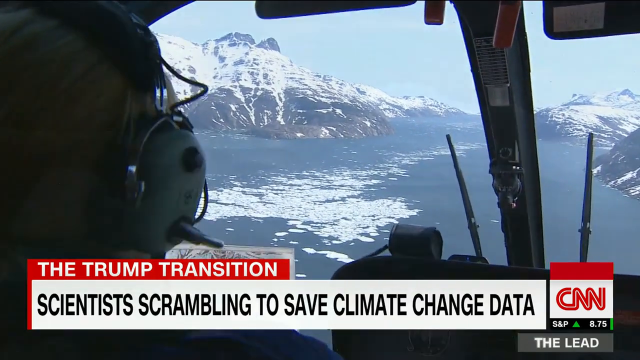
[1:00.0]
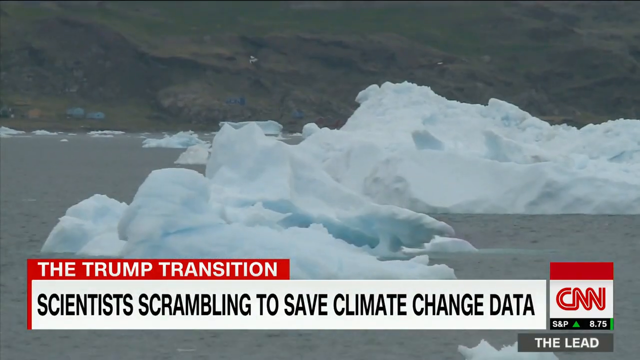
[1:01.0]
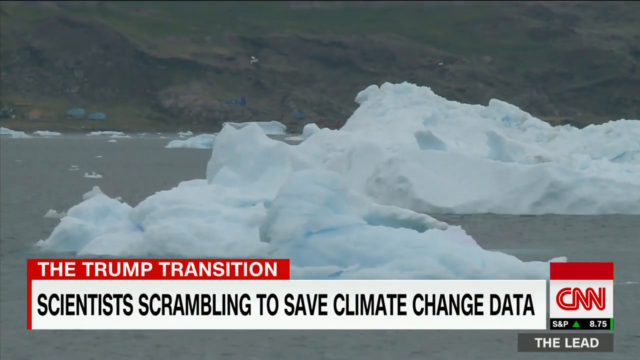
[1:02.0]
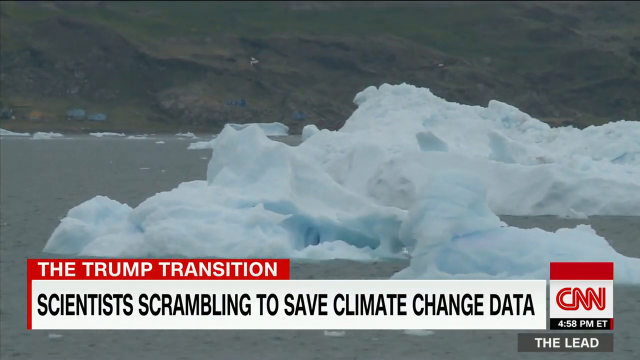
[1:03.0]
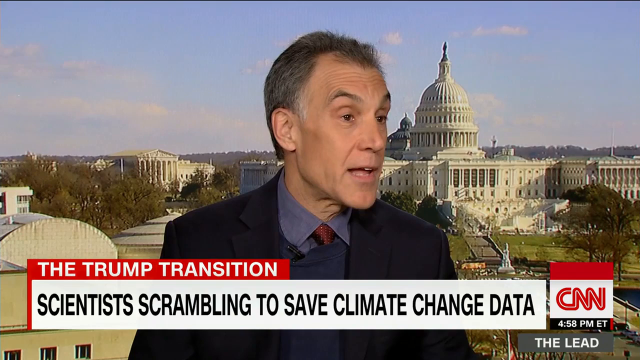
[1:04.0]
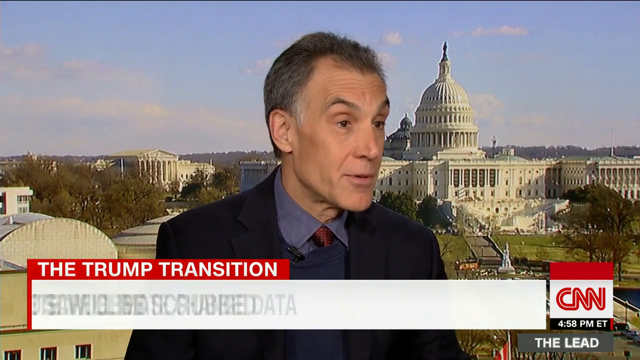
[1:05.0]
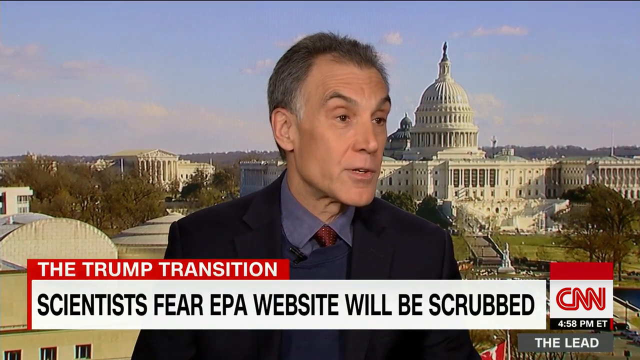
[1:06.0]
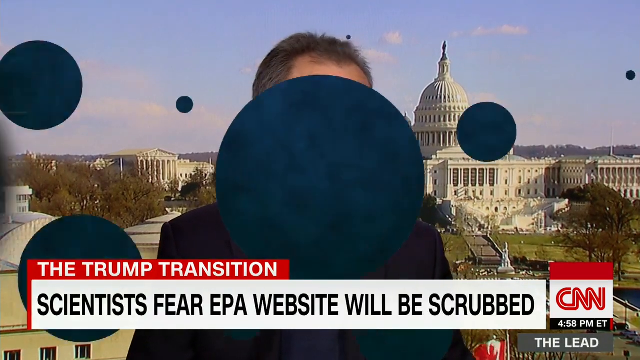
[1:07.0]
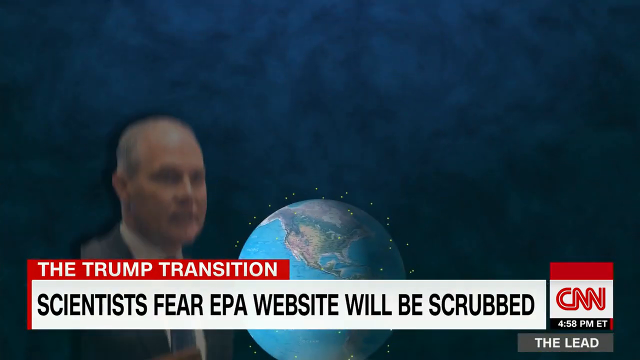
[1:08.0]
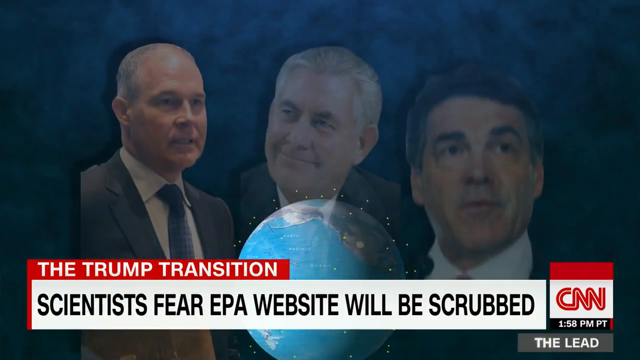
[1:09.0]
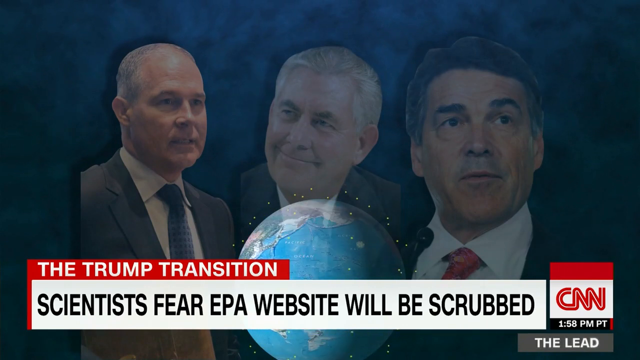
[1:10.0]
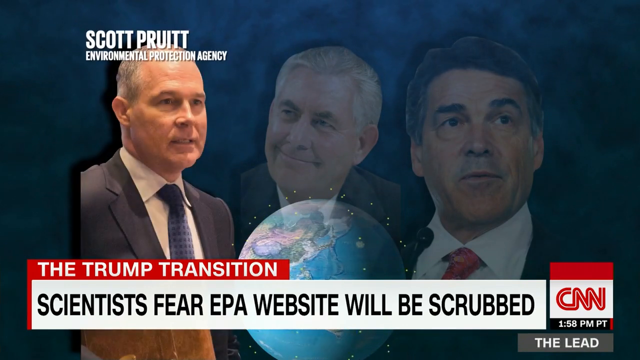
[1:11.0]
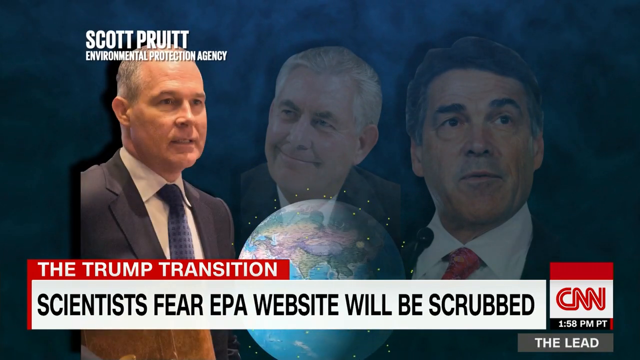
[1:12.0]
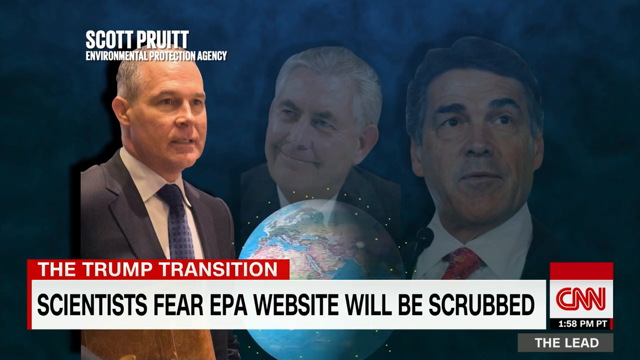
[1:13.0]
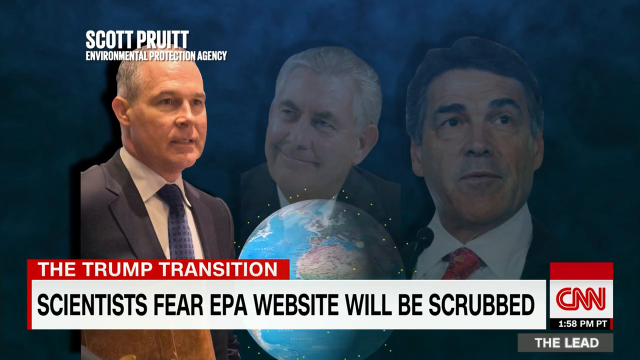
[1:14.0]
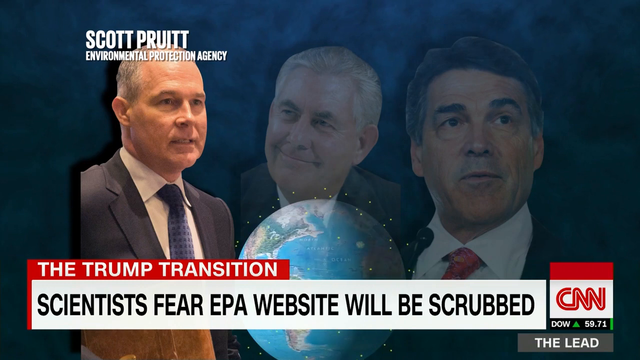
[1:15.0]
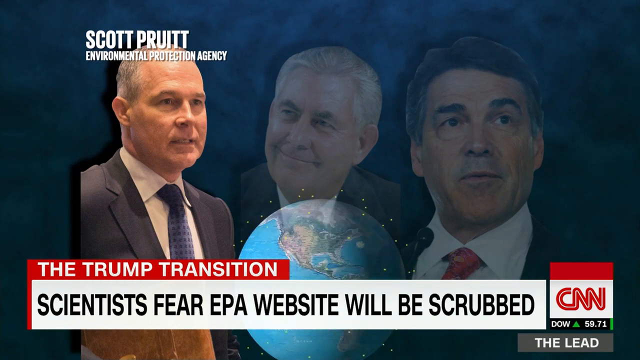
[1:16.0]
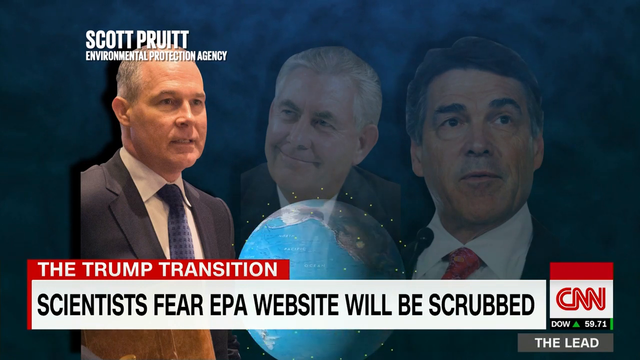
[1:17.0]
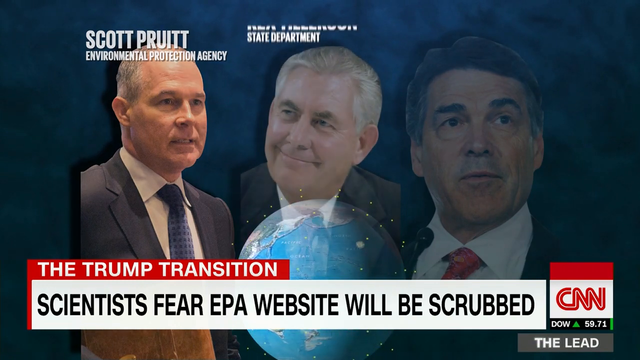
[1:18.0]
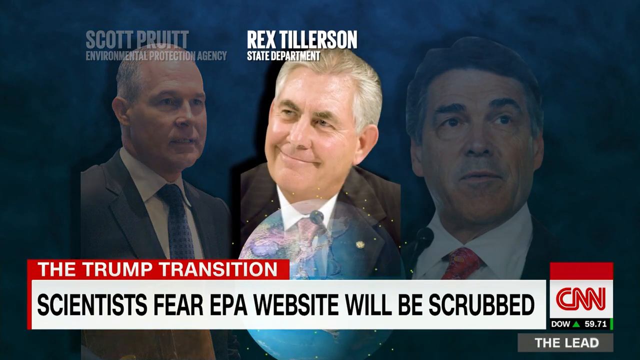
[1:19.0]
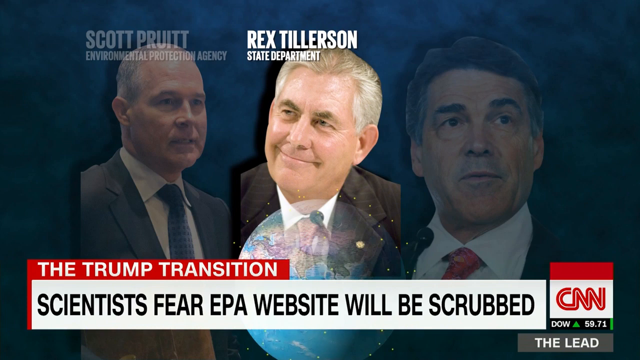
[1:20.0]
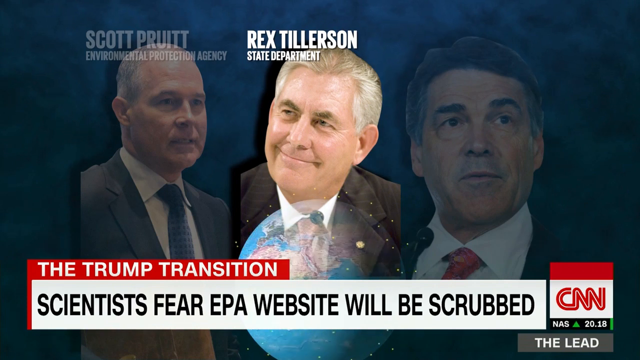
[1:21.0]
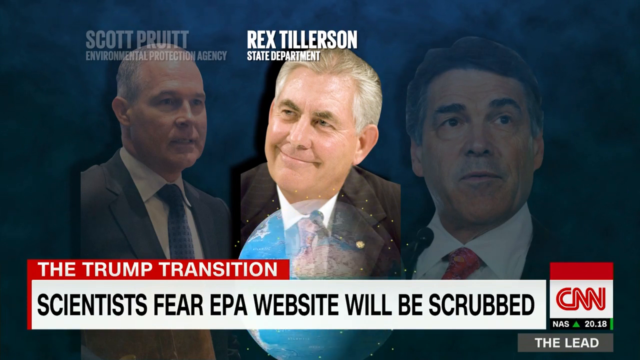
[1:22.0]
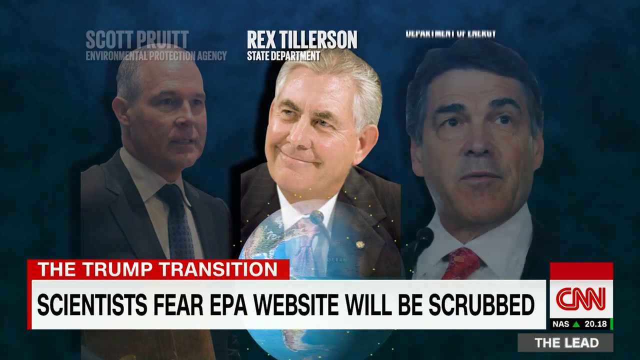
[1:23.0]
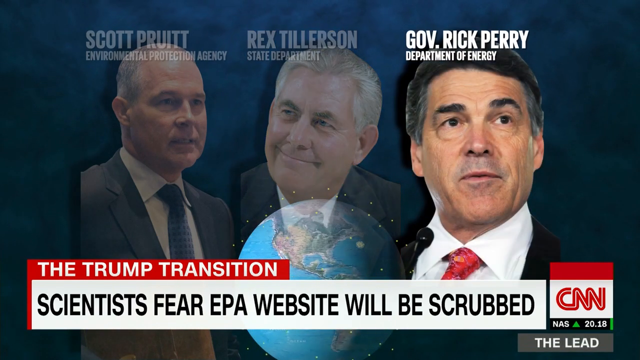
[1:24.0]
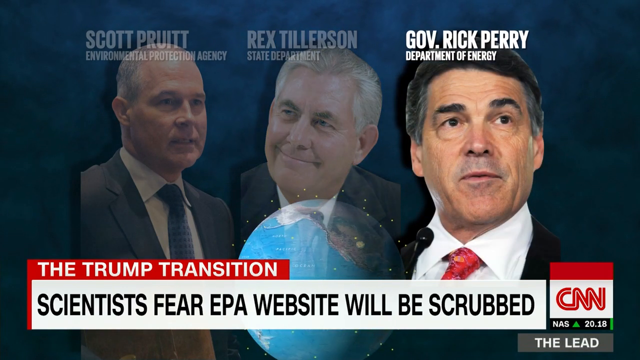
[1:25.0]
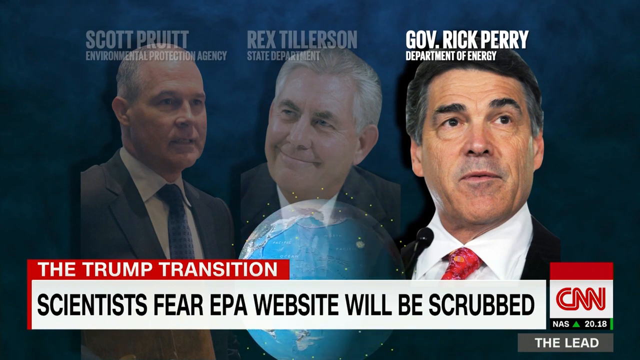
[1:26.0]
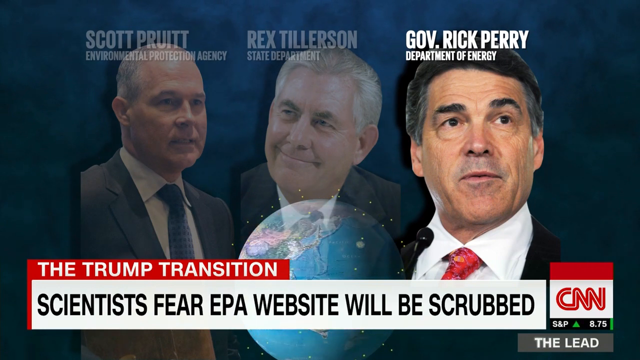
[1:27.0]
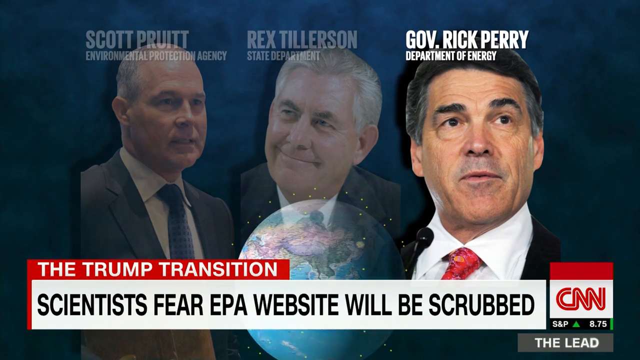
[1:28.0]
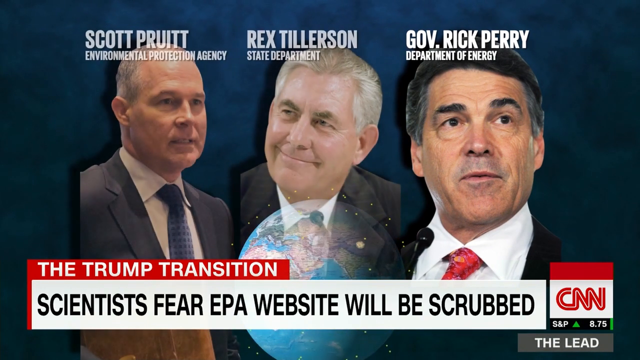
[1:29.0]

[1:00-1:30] Marlo speaks, and the text at the bottom changes to "scientists fear EPA website will be scrubbed." The screen transitions to a picture of a globe with faint, transparent images of three individuals on the Trump transition team: Scott Pruitt with the Environmental Protection Agency, Rex Tillerson with the State Department, and Governor Rick Perry with the Department of Energy. As each is lit up one by one, the globe at the bottom of the screen spins. The video then cuts to an image of something like a lake with glaciers, a river with broken-up pieces of ice. In the bottom right-hand corner, under the CNN logo, the time is shown, and it also says "the lead."